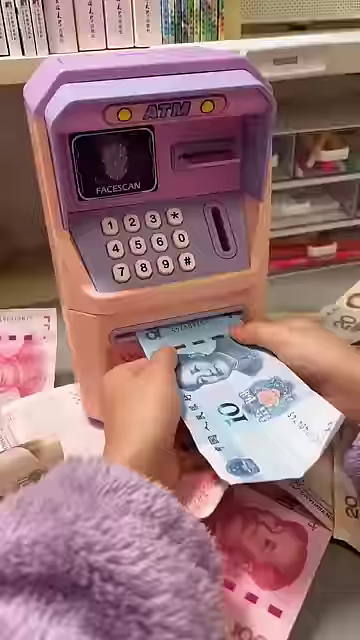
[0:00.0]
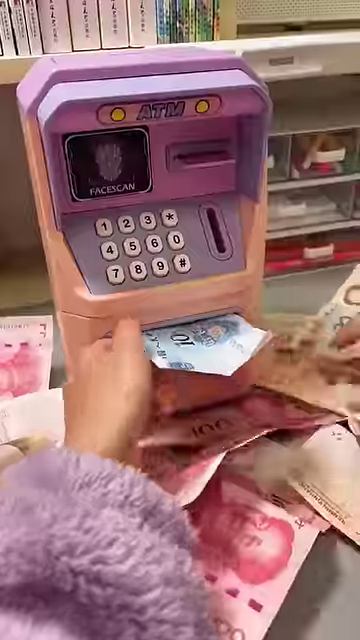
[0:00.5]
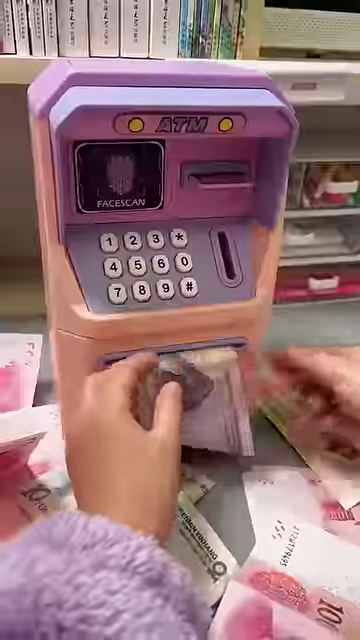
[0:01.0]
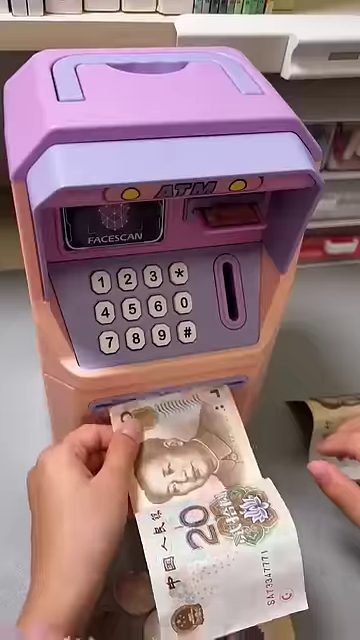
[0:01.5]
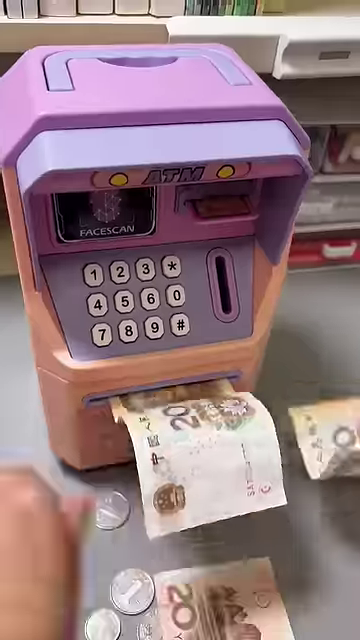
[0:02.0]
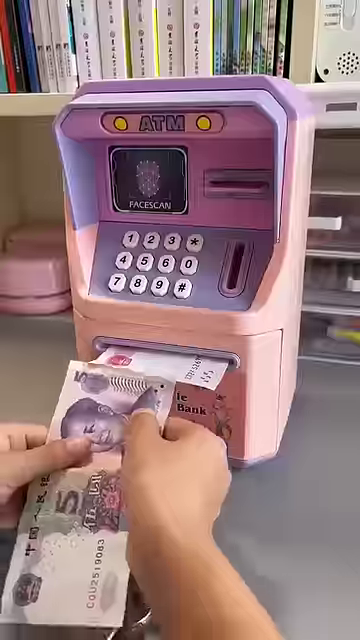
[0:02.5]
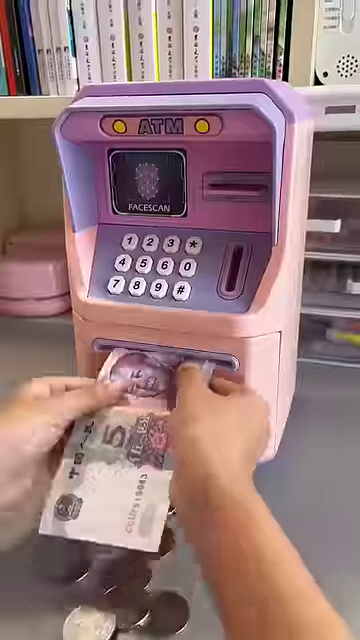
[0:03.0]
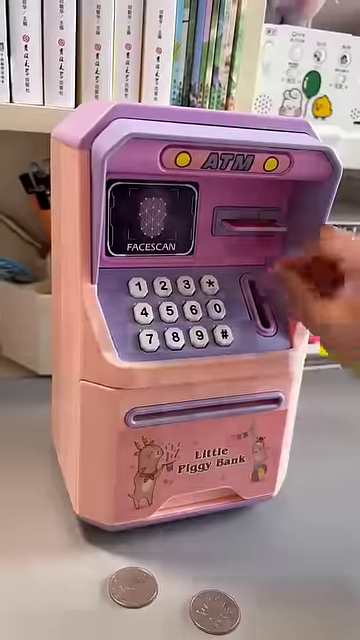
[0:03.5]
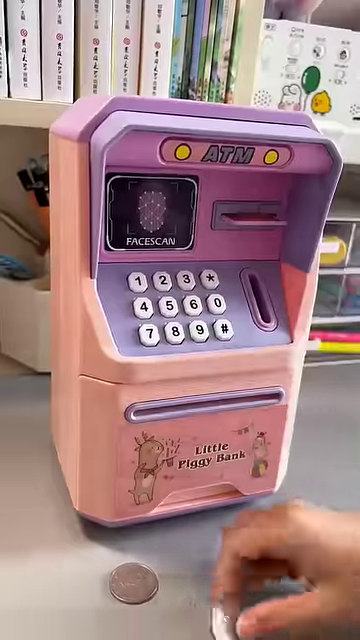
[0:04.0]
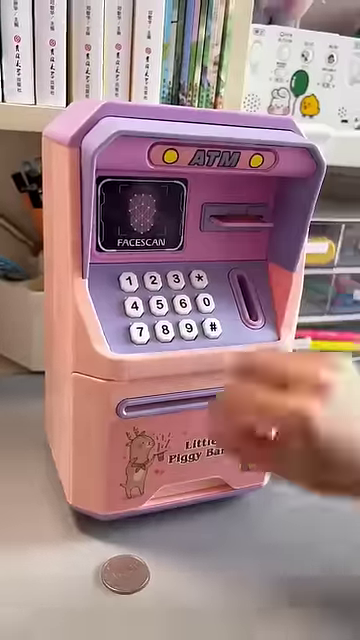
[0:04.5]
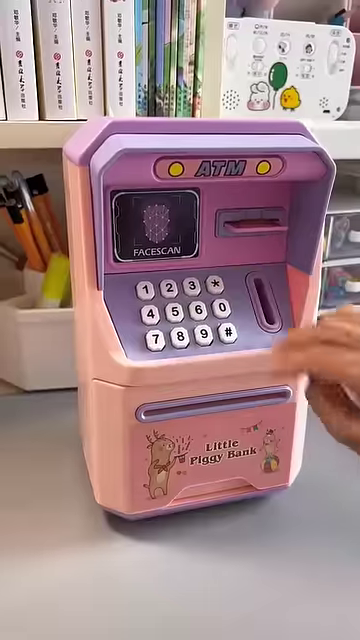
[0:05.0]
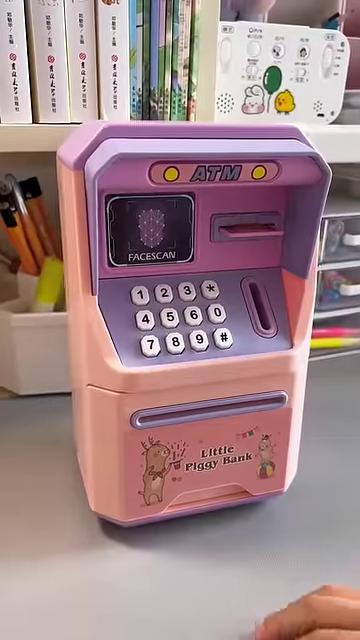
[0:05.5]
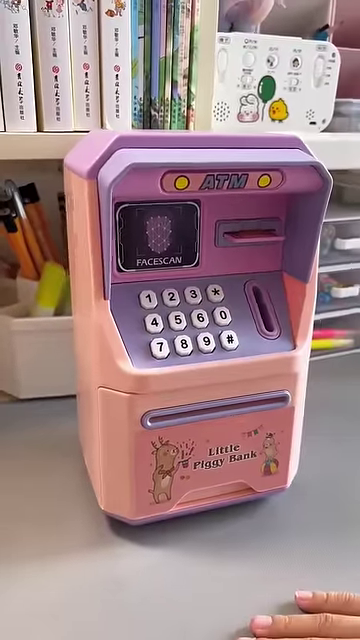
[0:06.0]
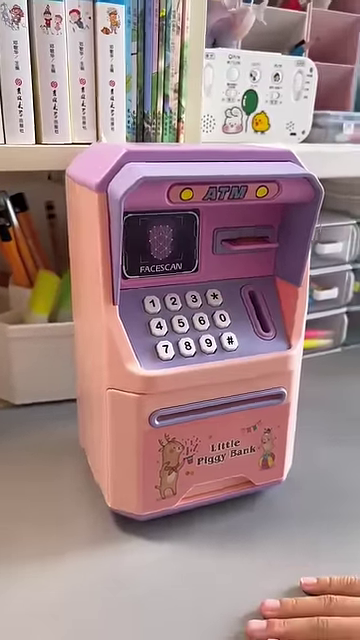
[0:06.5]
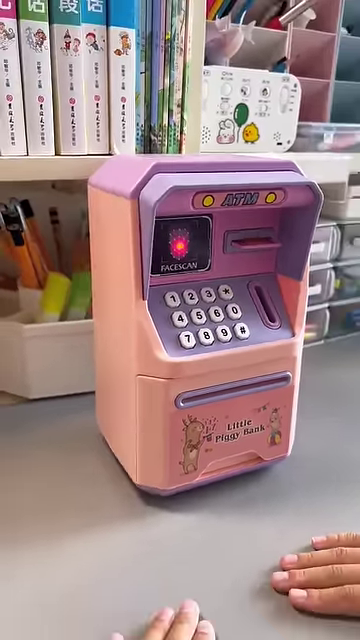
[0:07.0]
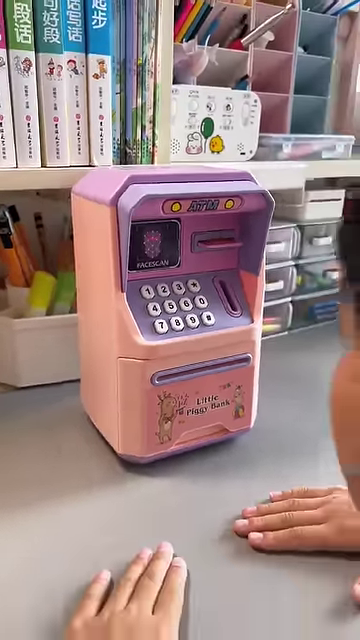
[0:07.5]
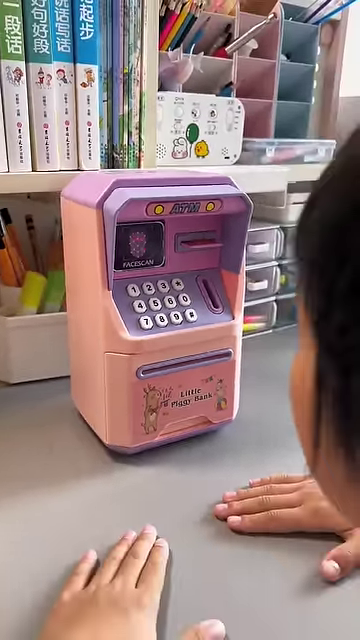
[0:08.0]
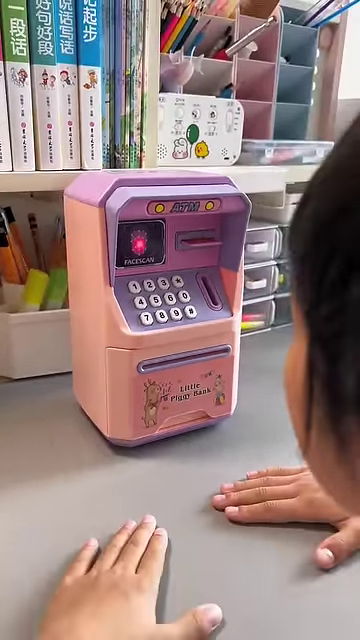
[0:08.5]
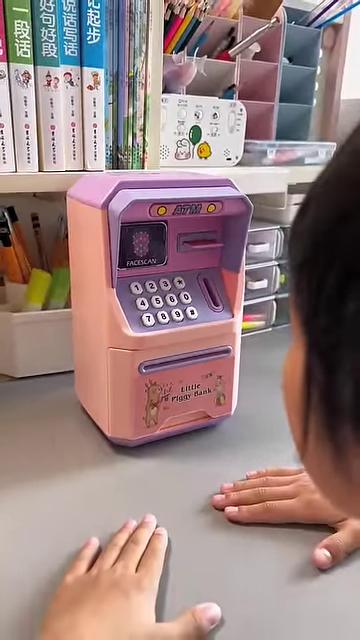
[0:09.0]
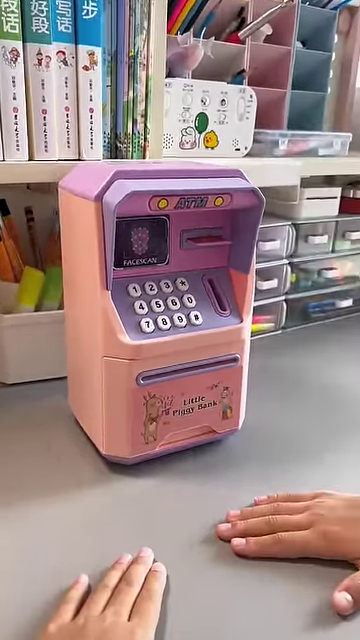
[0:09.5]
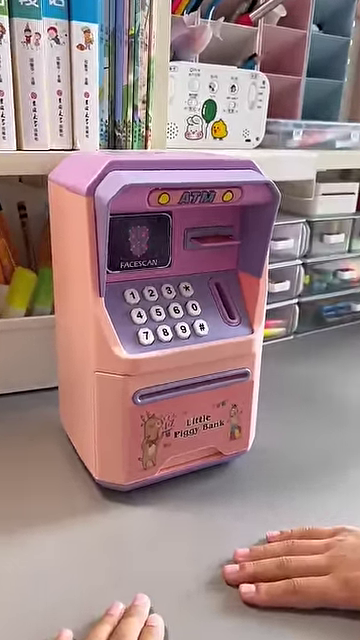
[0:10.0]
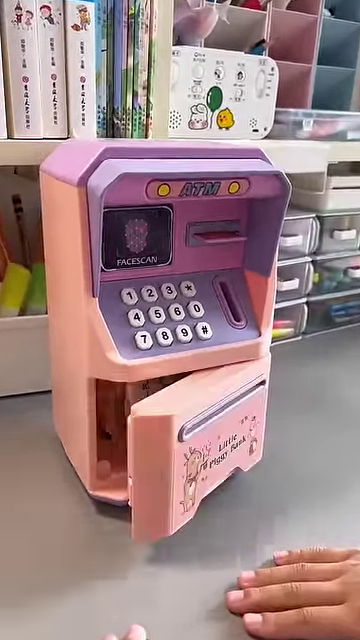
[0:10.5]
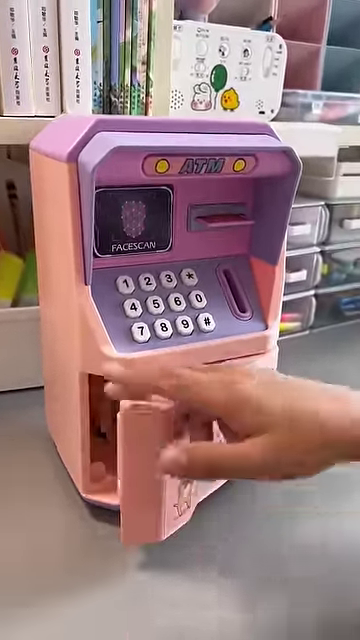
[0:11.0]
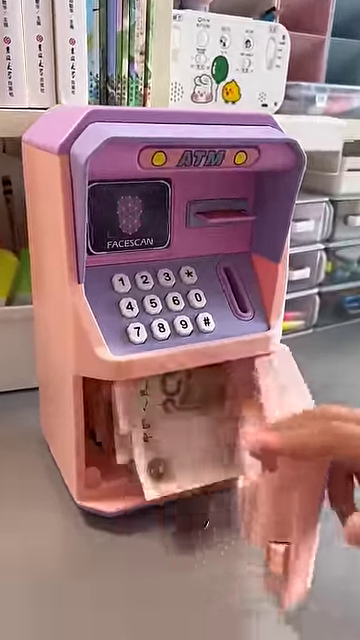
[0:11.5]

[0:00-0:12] A title appears on screen. The video begins with a child's piggy bank that eats money, a little plastic ATM sitting on what may be a desk or something similar, in what looks like a school setting. There are some books, some little compartments and some writing utensils. There is a whole bunch of money, and it is unclear whether it is play money or real money; the coins look real, and the bills are not American, possibly Chinese or Japanese, some kind of Asian bills. She has quite a pile of bills in front of her but does not put it all in. She feeds four bills into the ATM, which sucks them right in: a ten, a second bill whose value cannot be made out, a twenty and a five. Then she puts in three coins. She waits a moment, a little red light flashes on the screen, and then the bottom of the ATM pops open where all the money just went.